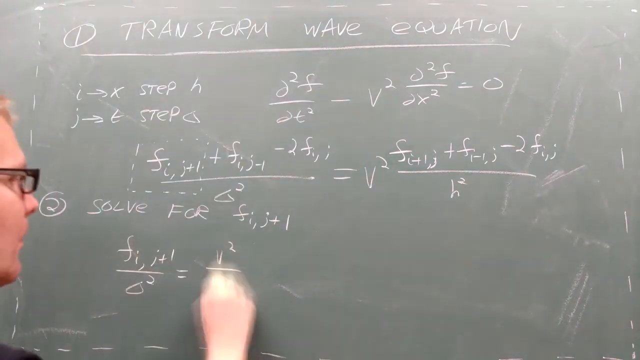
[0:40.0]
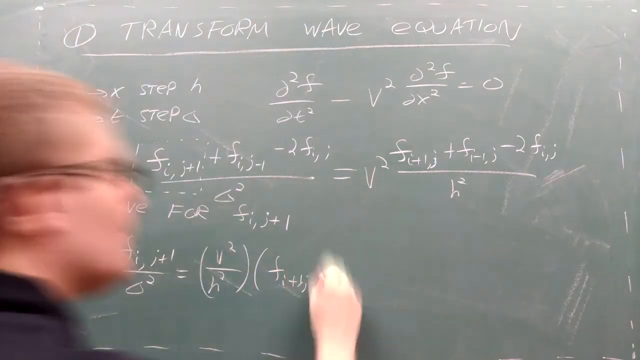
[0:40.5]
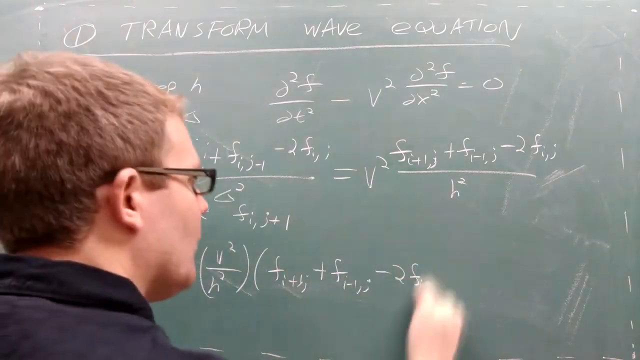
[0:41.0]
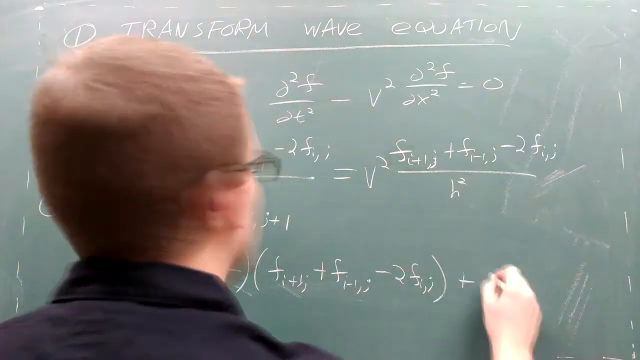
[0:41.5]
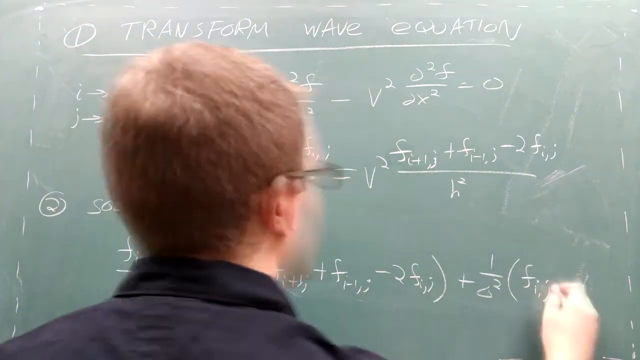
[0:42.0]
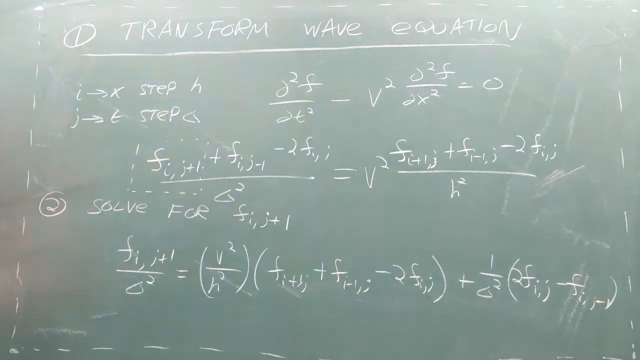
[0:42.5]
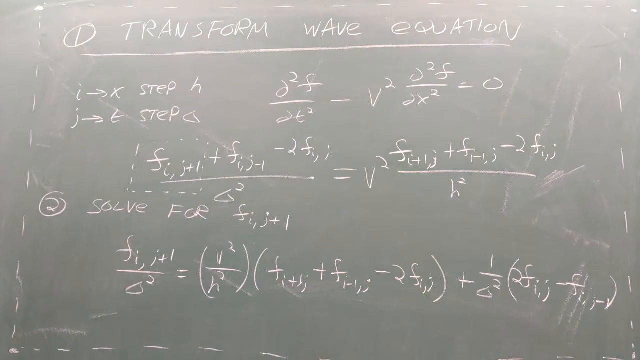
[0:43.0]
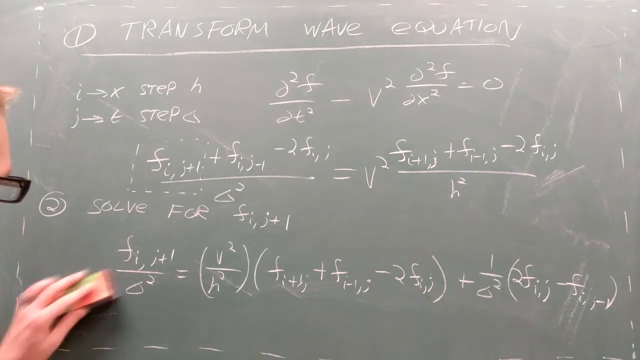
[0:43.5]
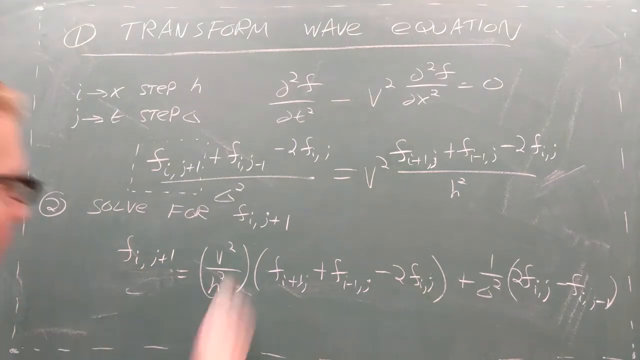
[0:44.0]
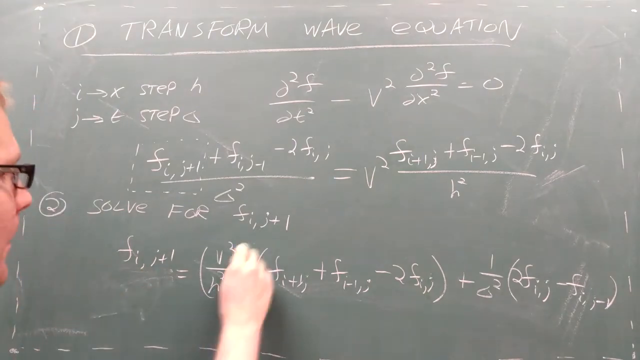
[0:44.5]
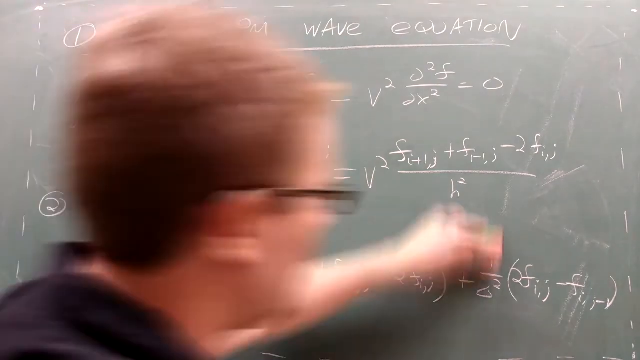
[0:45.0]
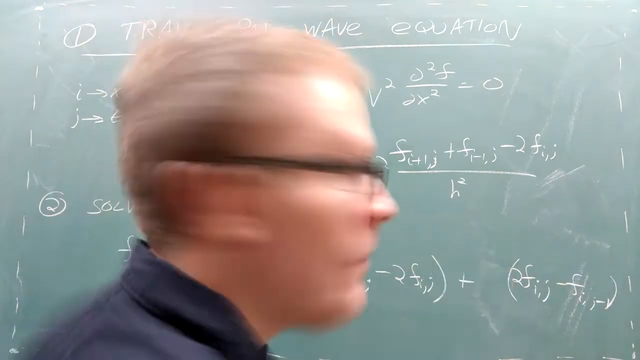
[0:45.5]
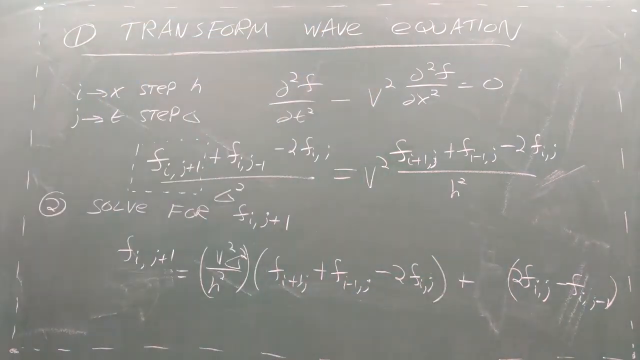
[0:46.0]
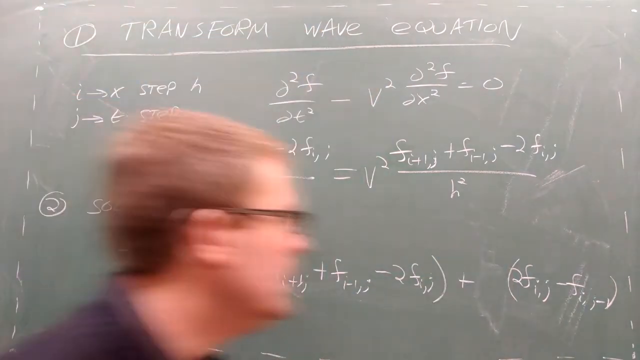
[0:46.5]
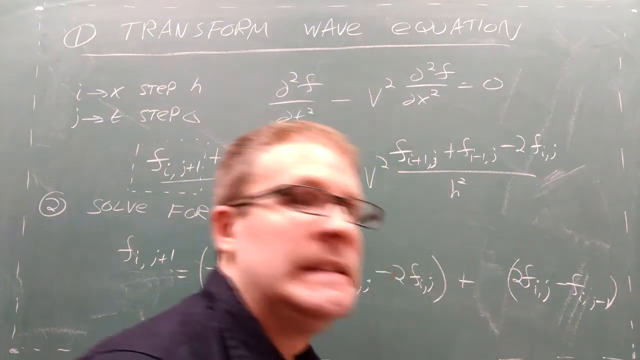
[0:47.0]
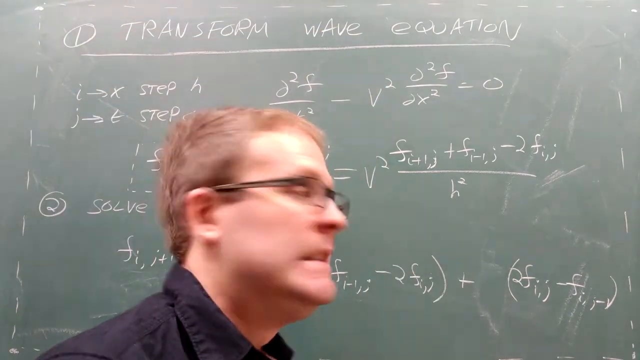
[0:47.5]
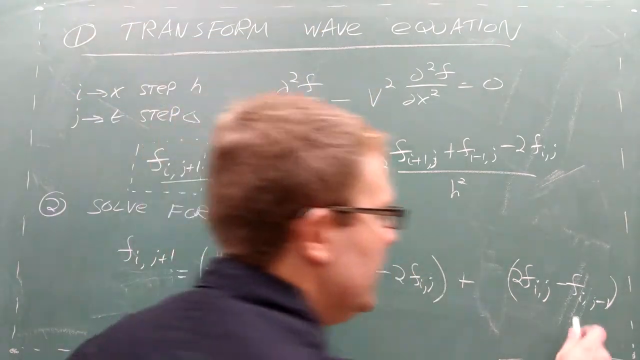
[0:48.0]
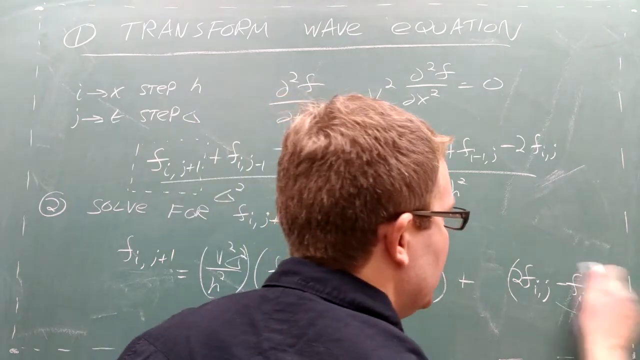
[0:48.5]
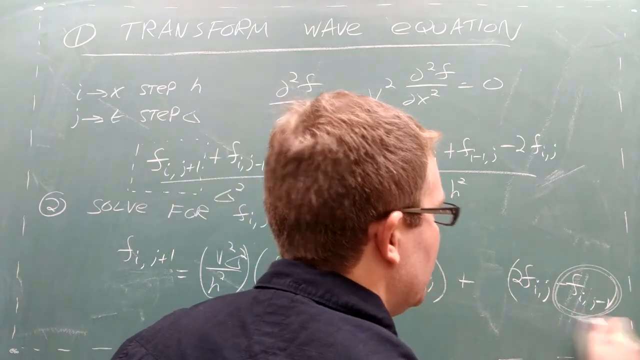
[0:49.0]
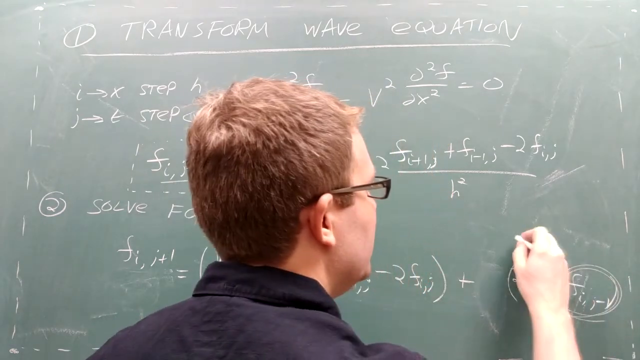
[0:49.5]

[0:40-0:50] He continues writing down the steps for the first equation, going back to fix his mistakes as he goes, and puts down the steps for solving it.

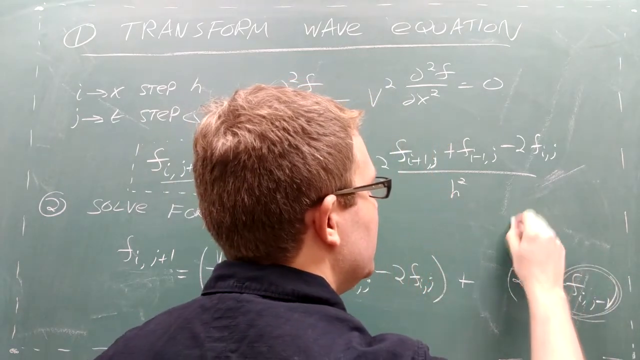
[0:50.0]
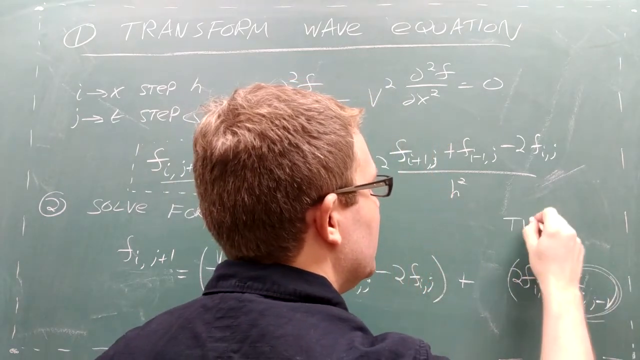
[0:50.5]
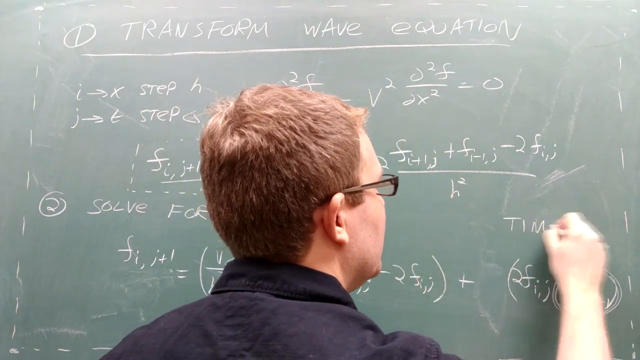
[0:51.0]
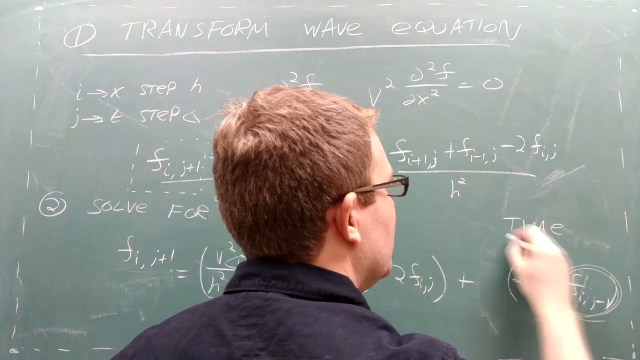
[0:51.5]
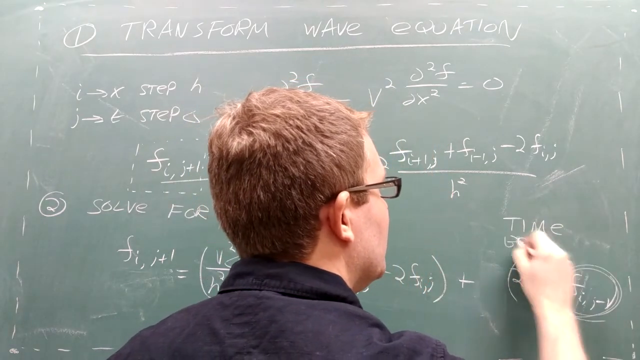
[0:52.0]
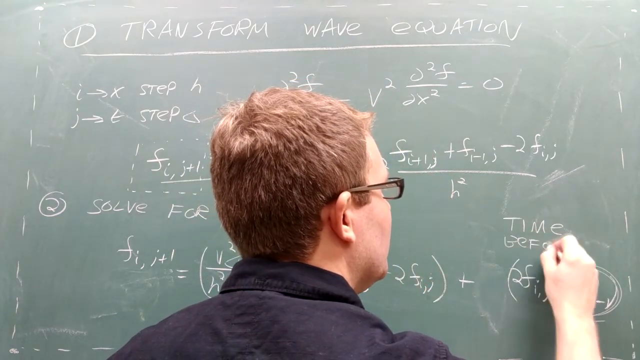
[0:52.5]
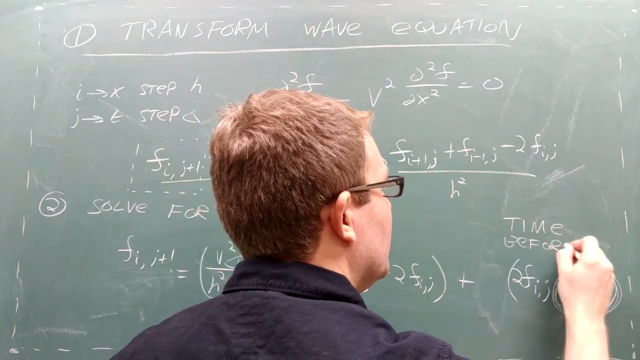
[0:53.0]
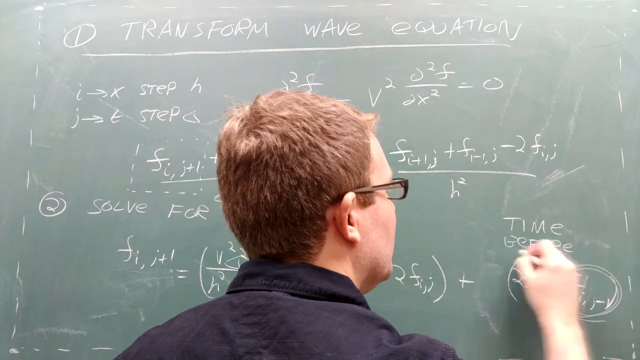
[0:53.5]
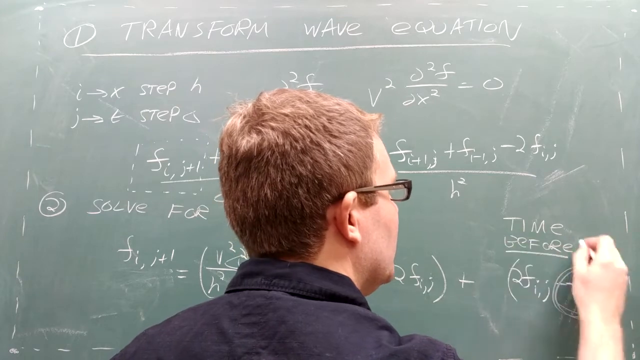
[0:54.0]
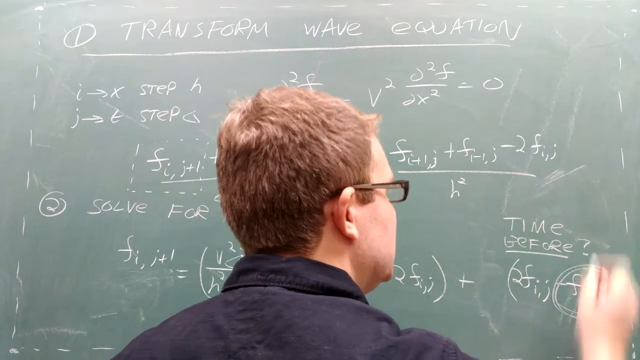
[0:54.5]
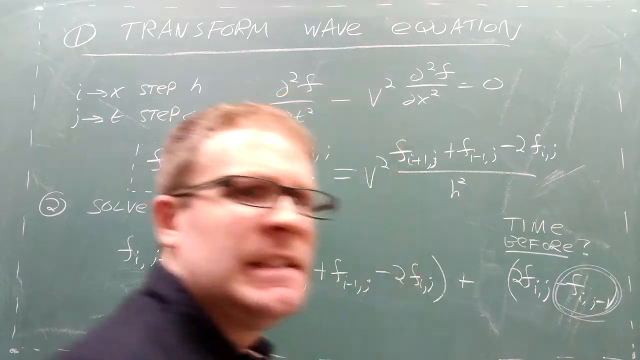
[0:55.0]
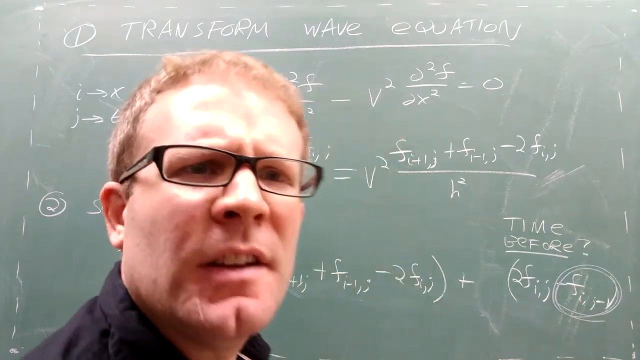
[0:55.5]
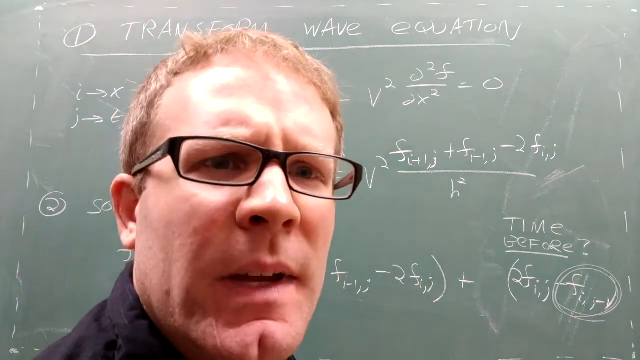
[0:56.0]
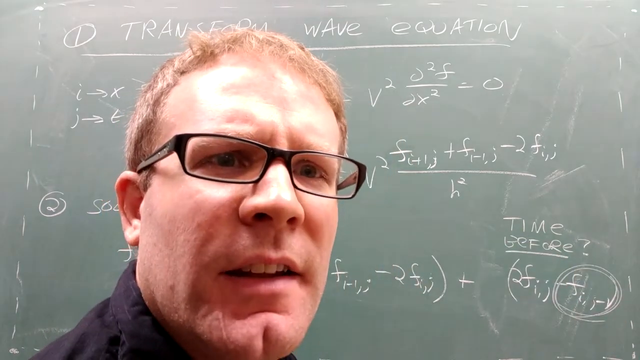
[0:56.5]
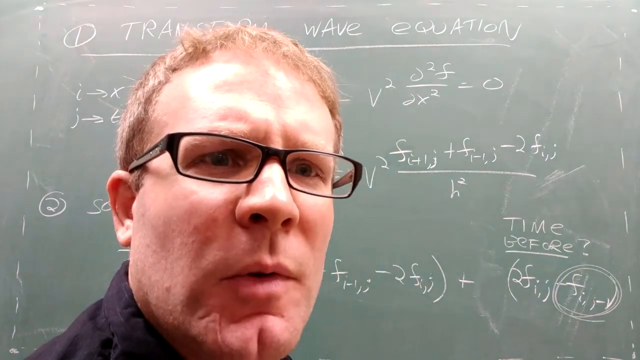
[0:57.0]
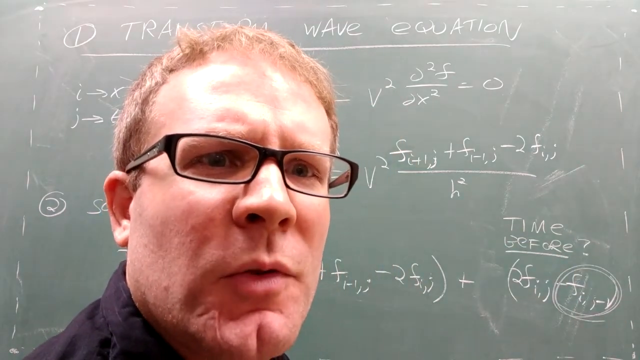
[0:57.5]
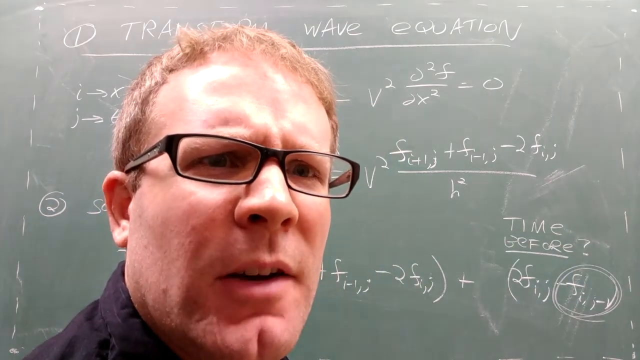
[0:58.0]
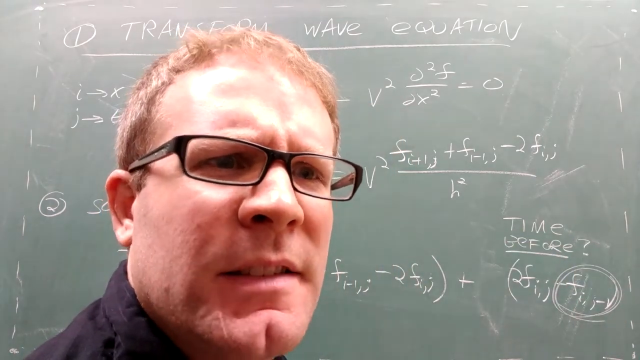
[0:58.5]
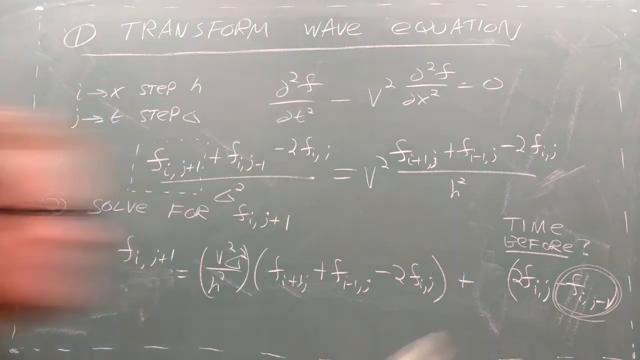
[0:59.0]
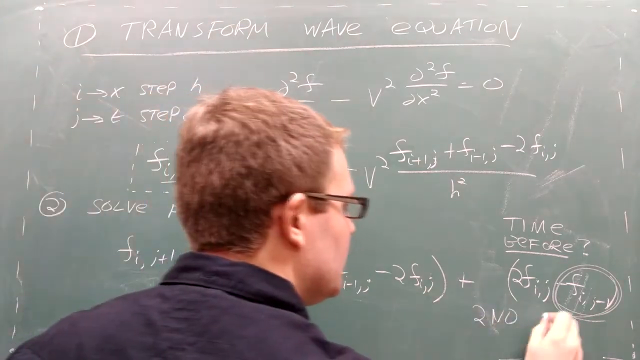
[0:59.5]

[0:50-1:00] He is still going over the steps, on step two, solving the equation, and shows the time before. He circles what is important as he works.